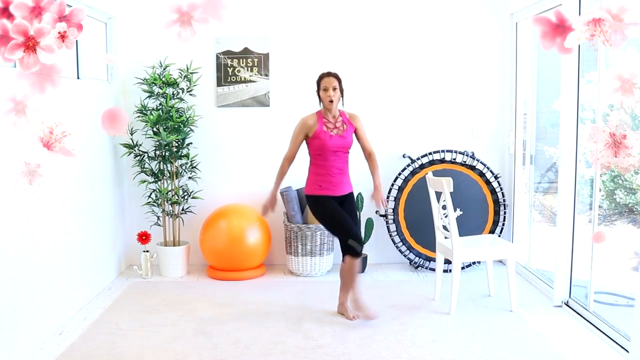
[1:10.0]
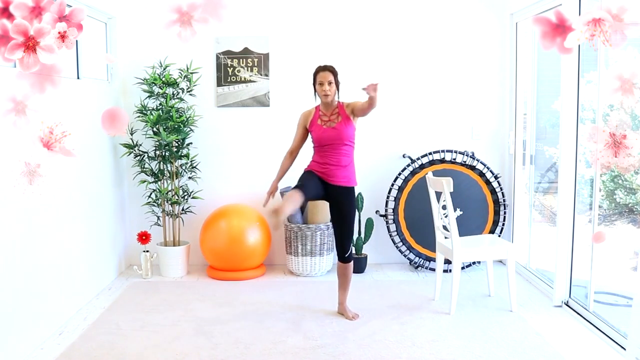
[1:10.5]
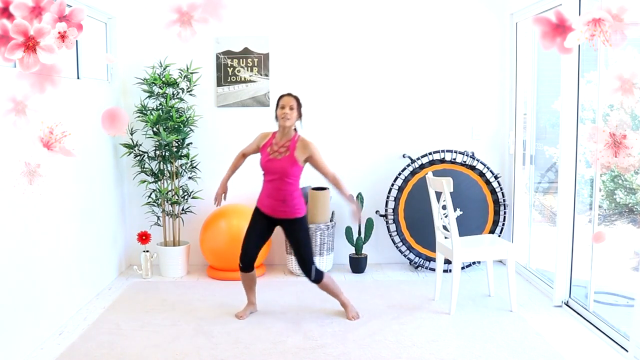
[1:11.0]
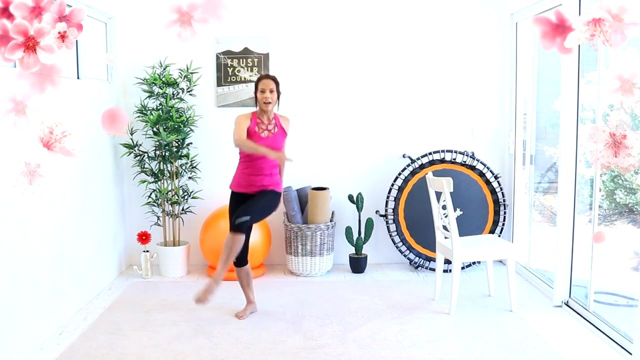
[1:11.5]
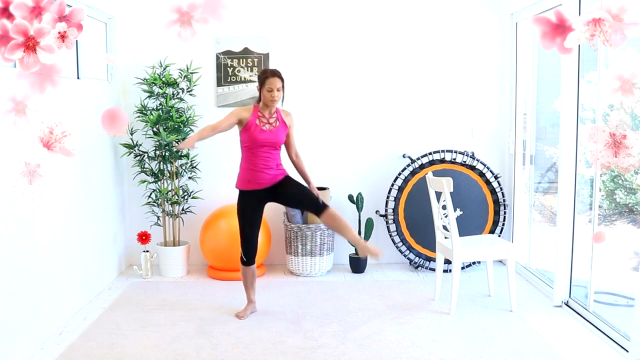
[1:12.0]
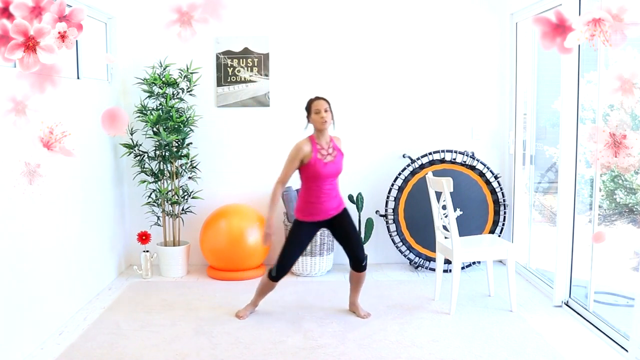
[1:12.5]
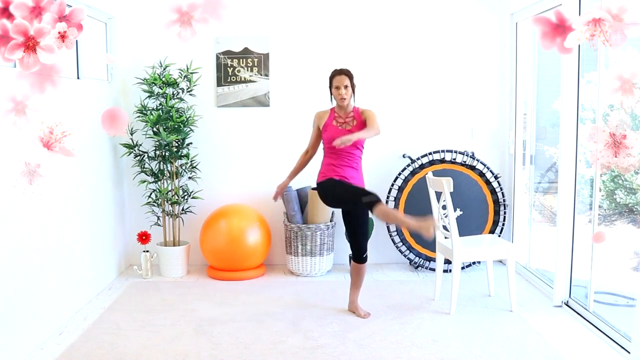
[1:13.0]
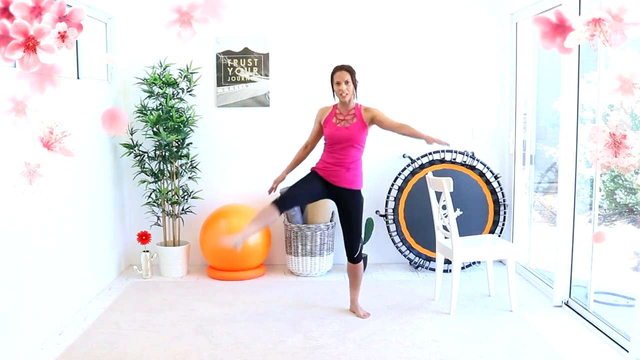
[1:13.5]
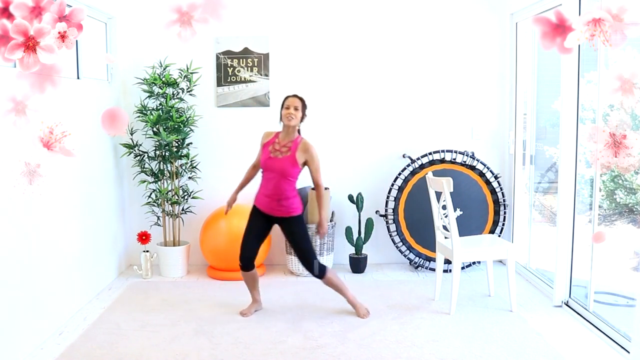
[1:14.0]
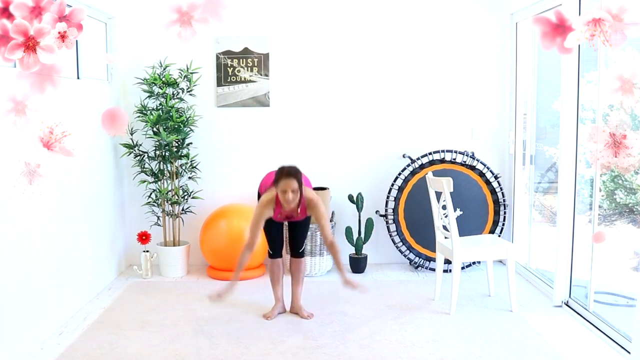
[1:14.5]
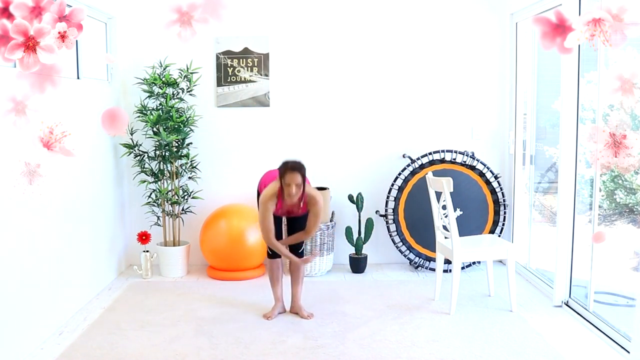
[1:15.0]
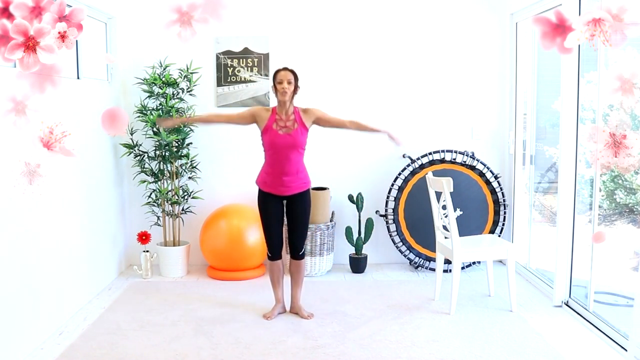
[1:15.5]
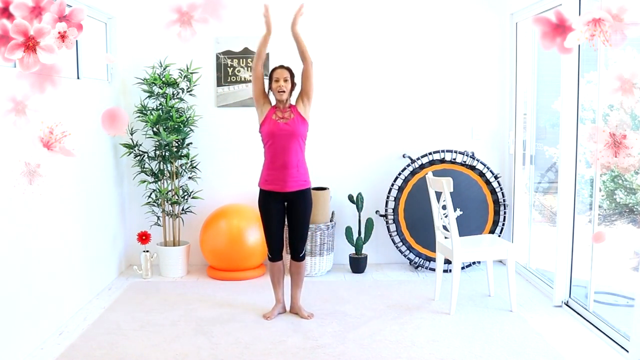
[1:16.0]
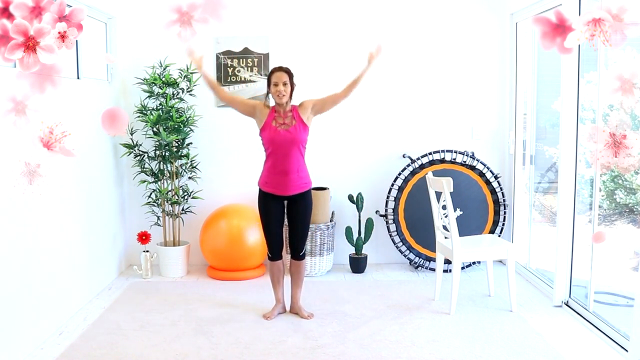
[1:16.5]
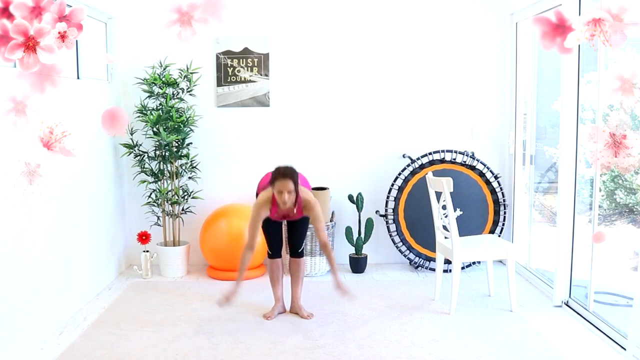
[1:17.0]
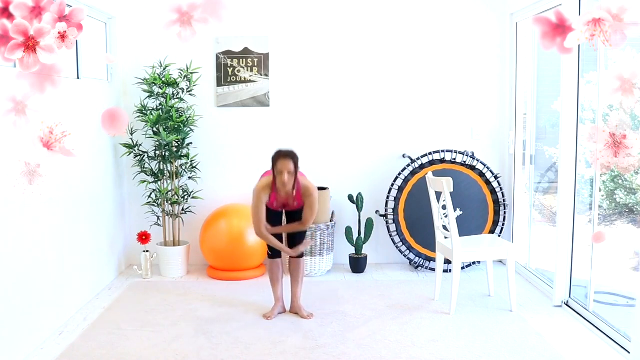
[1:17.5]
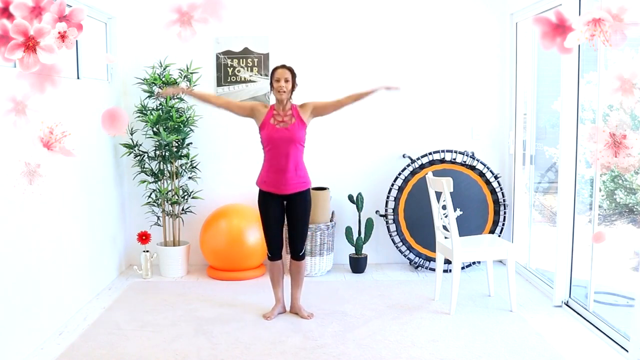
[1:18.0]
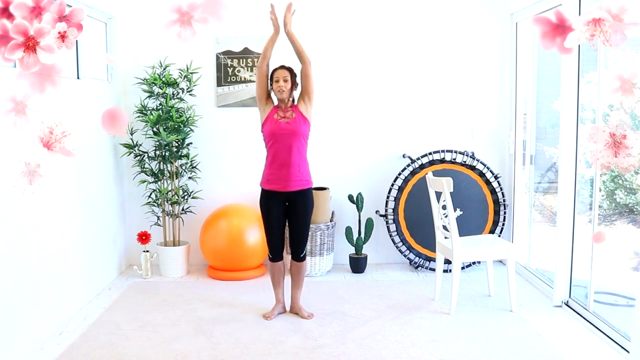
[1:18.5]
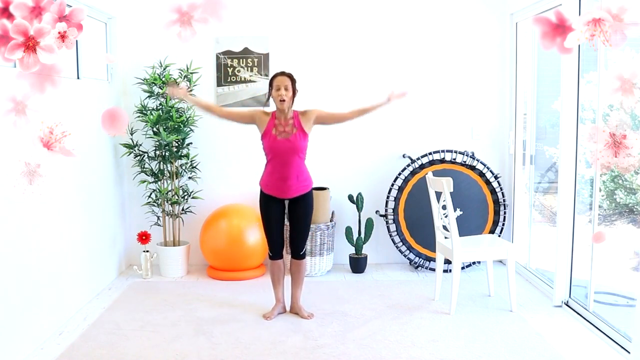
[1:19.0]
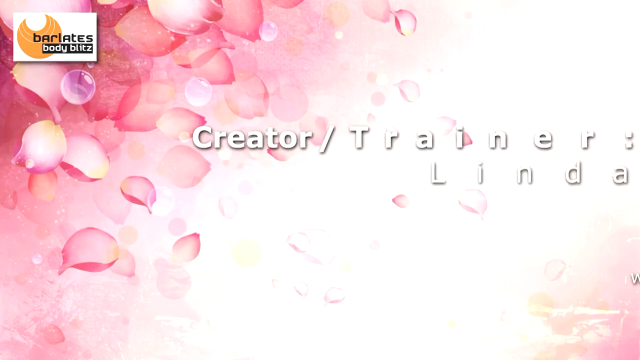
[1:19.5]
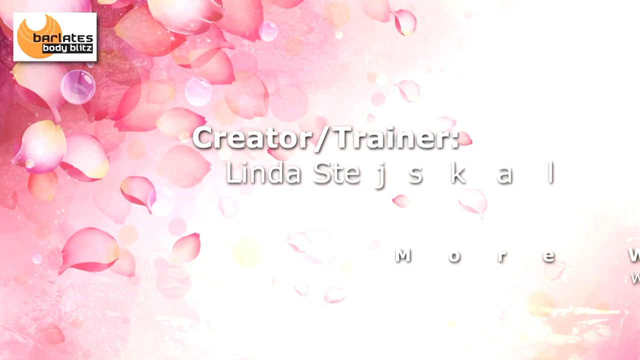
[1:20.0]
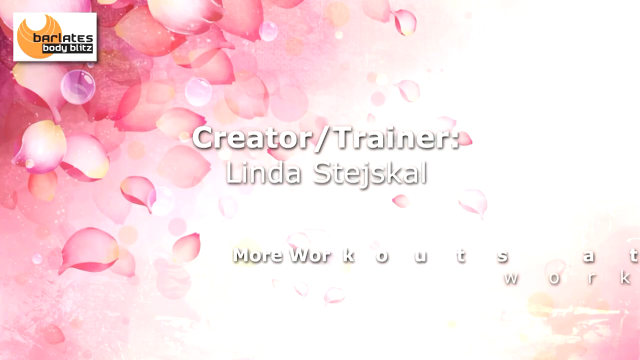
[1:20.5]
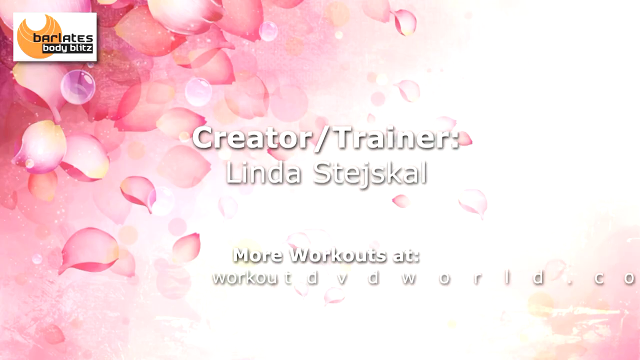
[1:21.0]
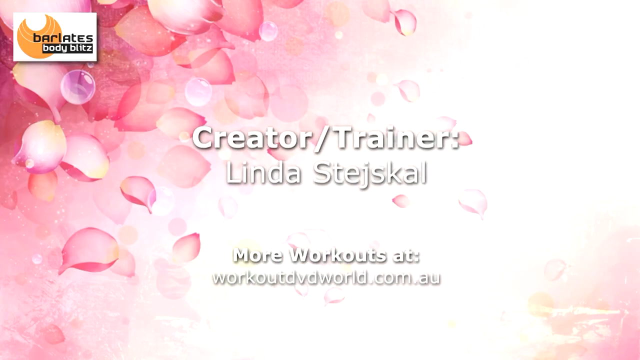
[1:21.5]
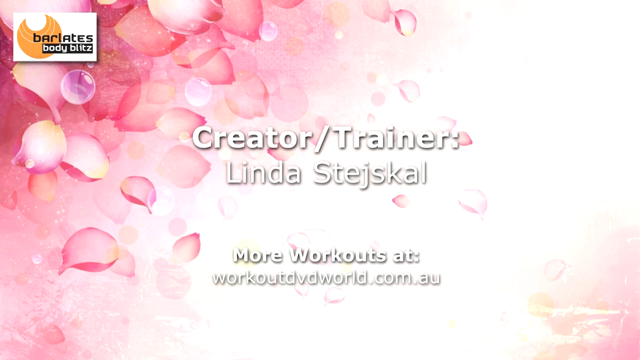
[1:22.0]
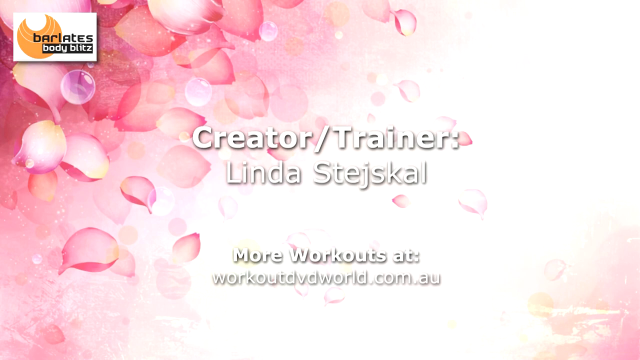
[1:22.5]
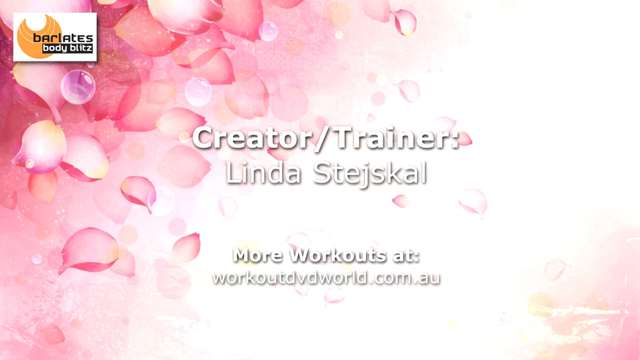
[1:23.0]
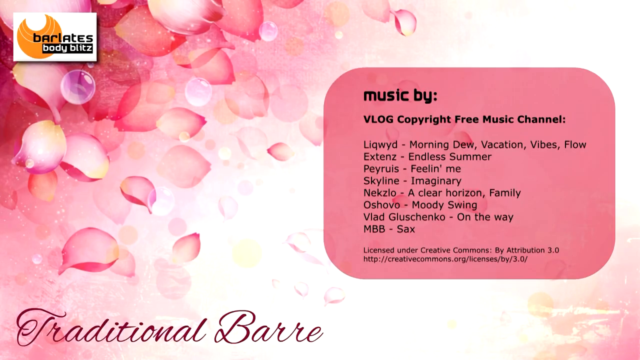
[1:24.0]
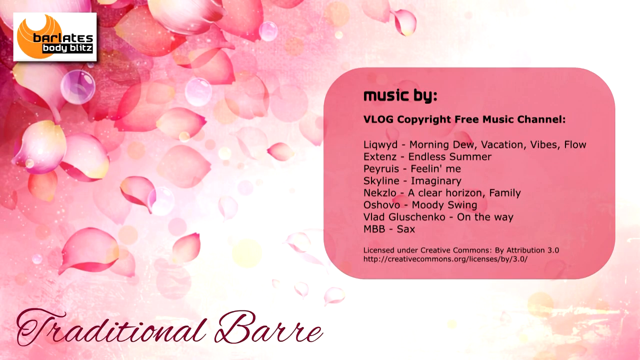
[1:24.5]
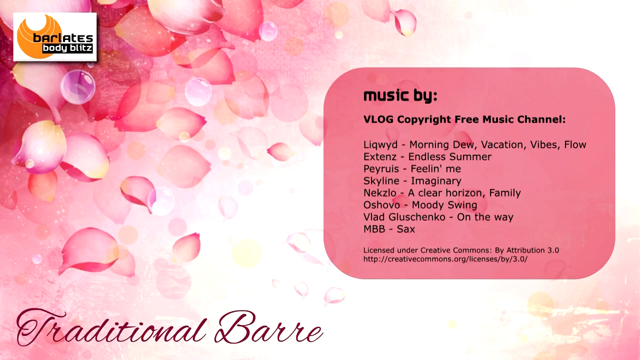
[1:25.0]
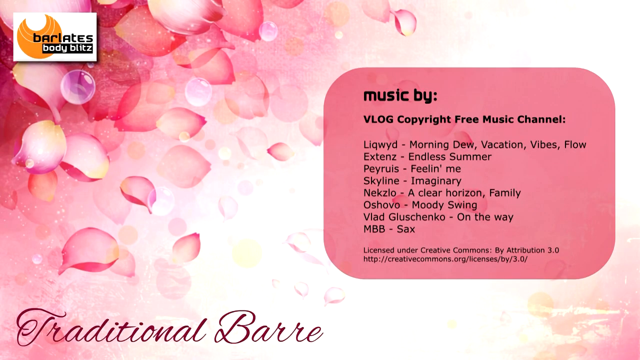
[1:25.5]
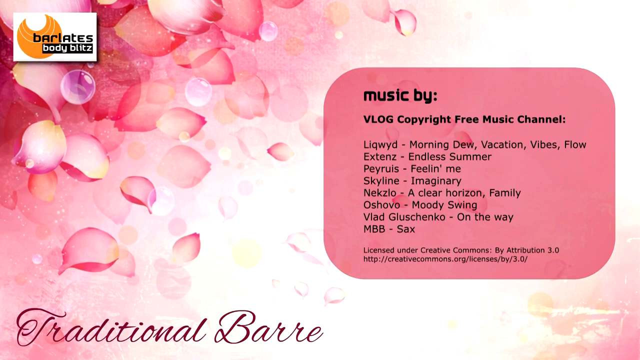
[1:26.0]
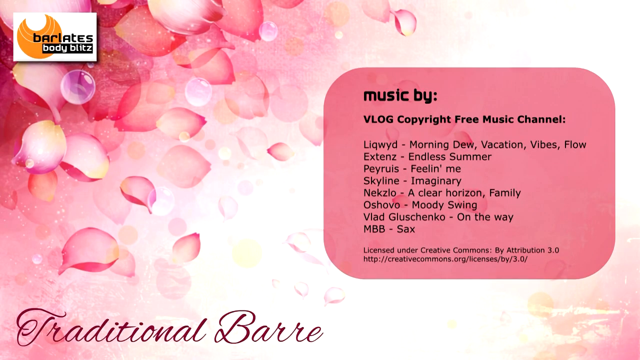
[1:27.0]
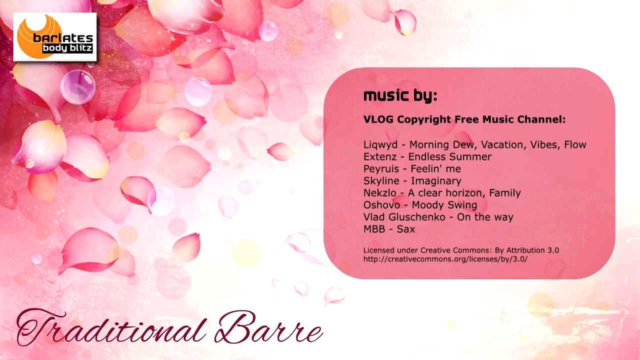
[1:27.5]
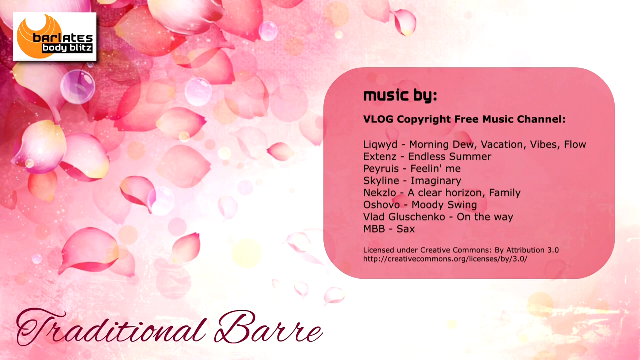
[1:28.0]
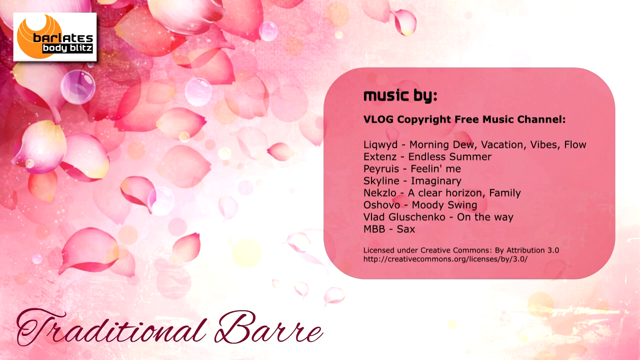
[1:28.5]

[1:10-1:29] The barefoot woman in the pink top and black sweatpants continues the exercise video. Her white balancing chair is now on the right side of the screen, in front of the trampoline, which has a gray center and an orange halo ring around it. An orange rubber exercise ball is to the right or to the left, a basket may contain yoga mats, and a sign on the wall reads "trust your" with something underneath that is hard to read. The woman wears a ponytail. A tall green plant is on the left side, and a short cactus plant is on the right side behind her. Animated flowers appear on the right side by the sliding glass door and on the left side of the screen, with what might be a red rose flower by the green plant. She does more yoga stretches or low-intensity aerobics. The video then moves to an ending with a lot more pink flower animation. Text reads "creator, trainer, Linda" with a surname spelled S-T-A-S-T-E-J-S-K-A-L, and "moreworkouts at workoutworld.com". Further text reads "copyright music my vlog copyright free music channel".